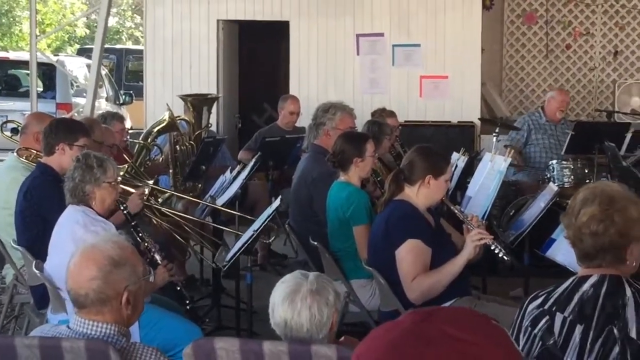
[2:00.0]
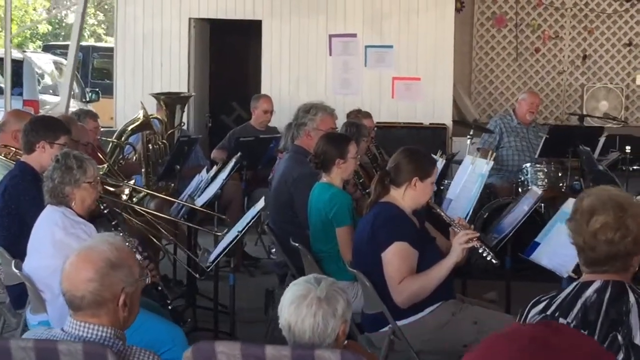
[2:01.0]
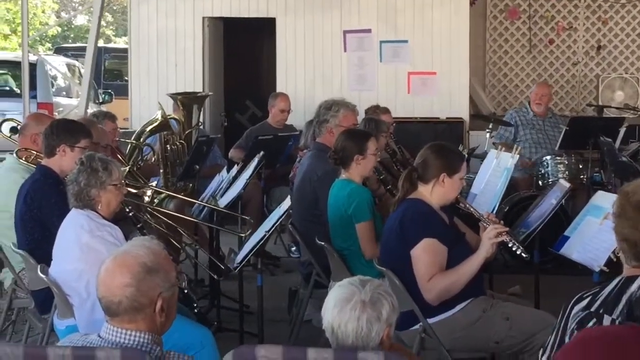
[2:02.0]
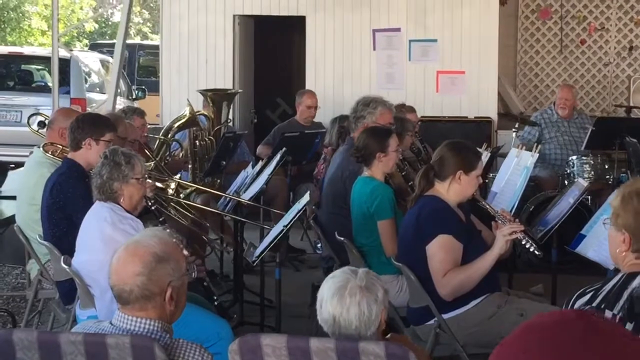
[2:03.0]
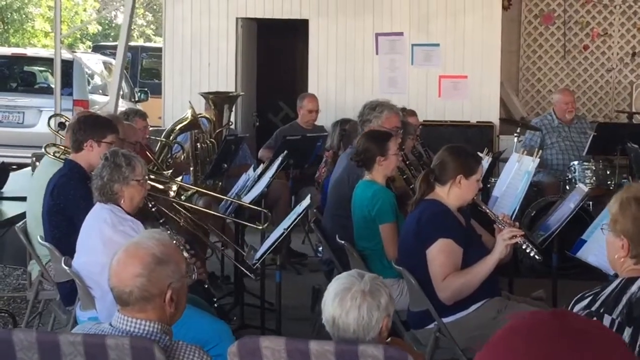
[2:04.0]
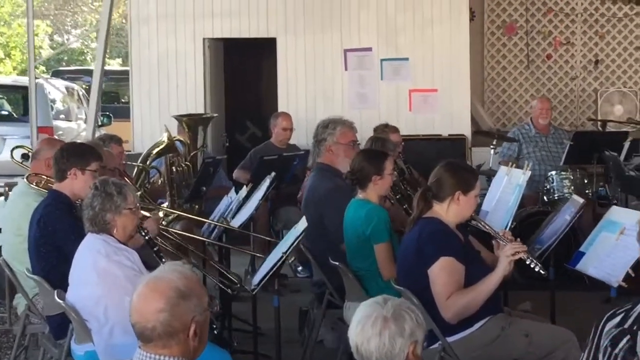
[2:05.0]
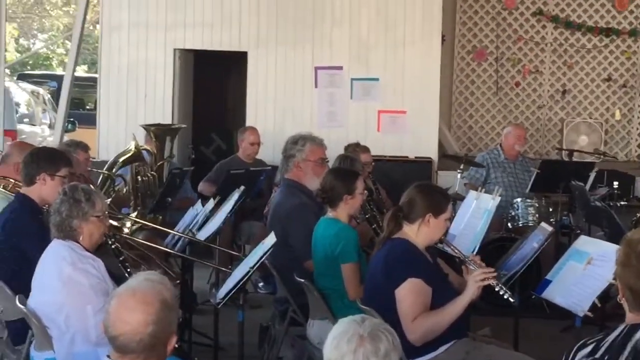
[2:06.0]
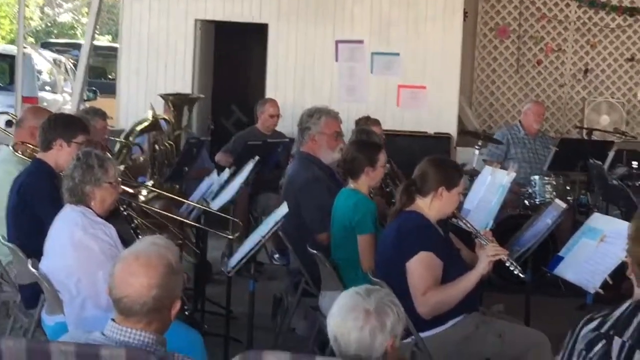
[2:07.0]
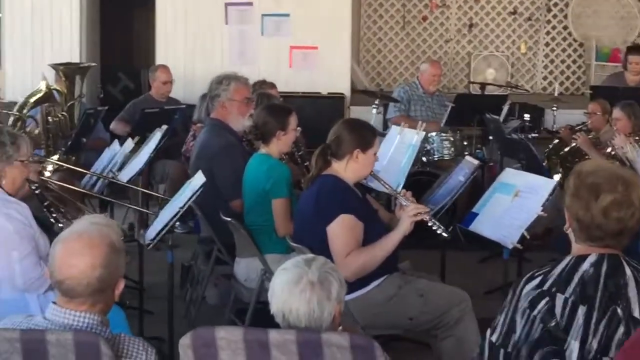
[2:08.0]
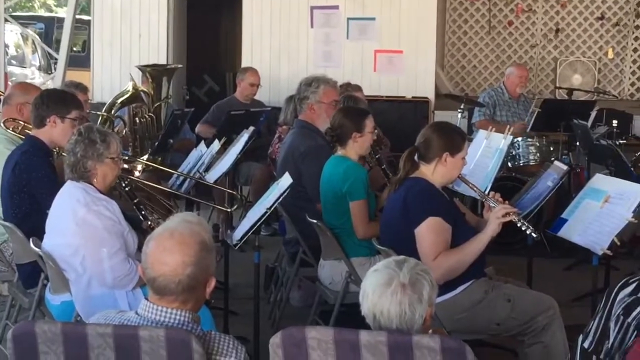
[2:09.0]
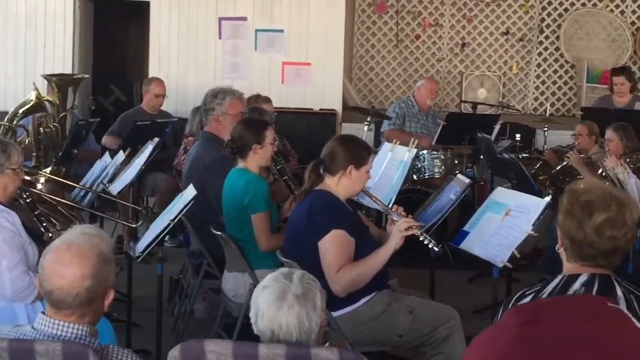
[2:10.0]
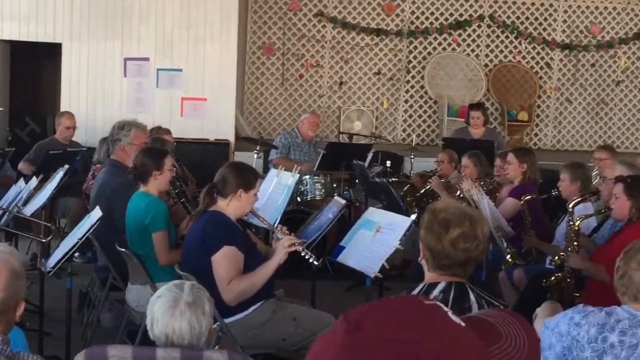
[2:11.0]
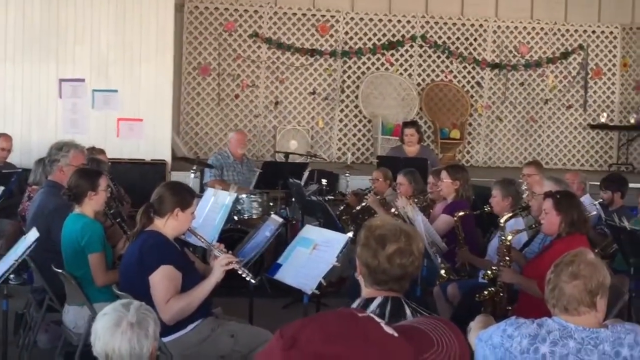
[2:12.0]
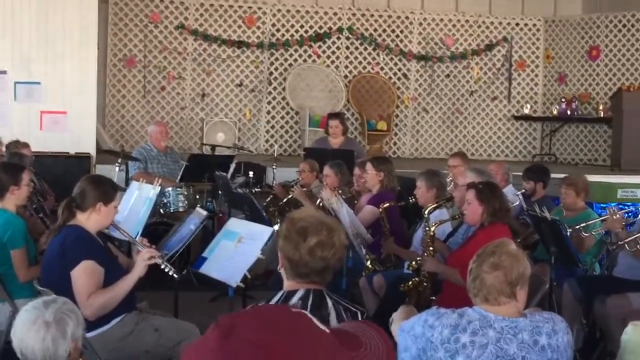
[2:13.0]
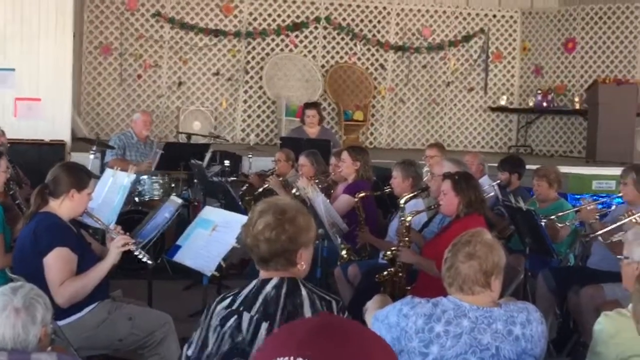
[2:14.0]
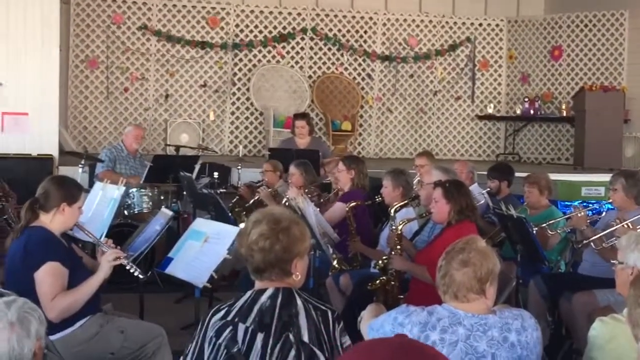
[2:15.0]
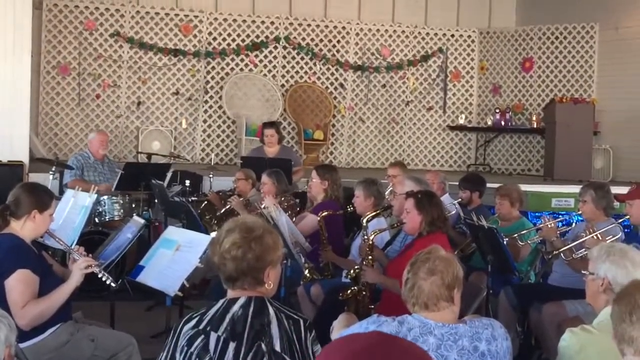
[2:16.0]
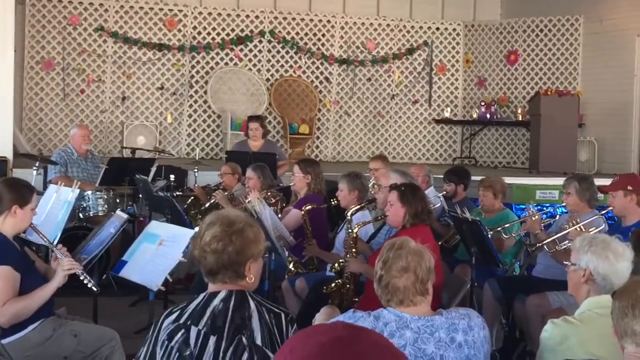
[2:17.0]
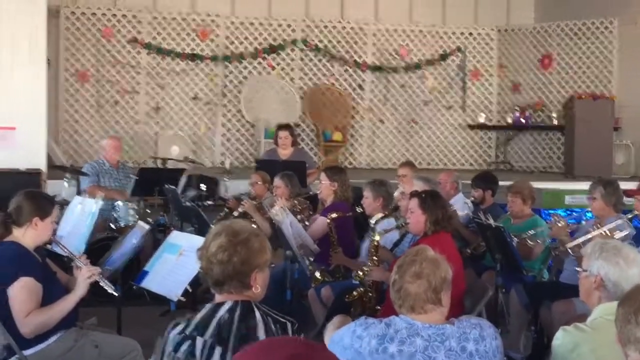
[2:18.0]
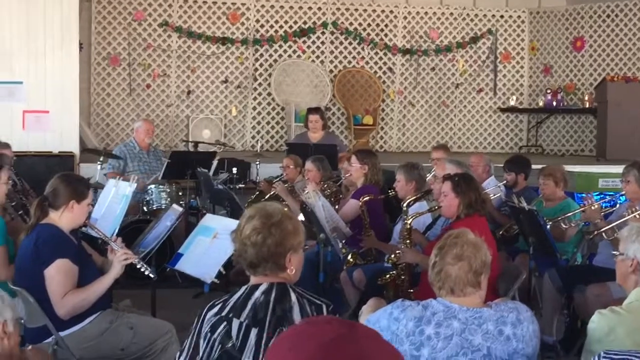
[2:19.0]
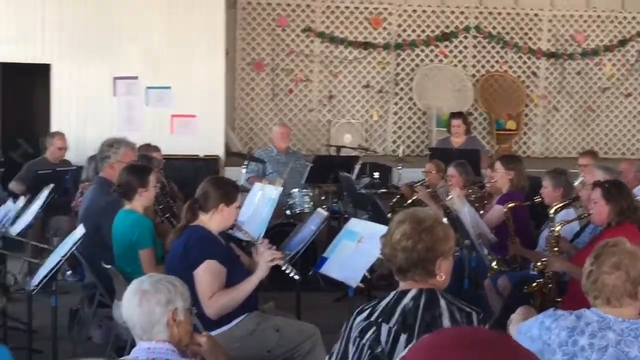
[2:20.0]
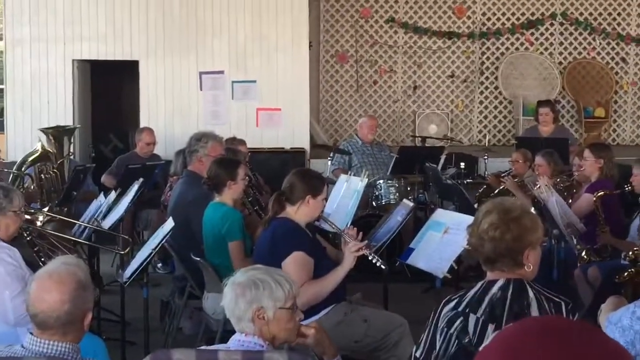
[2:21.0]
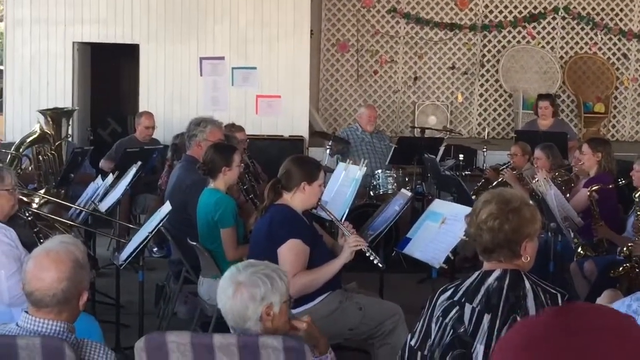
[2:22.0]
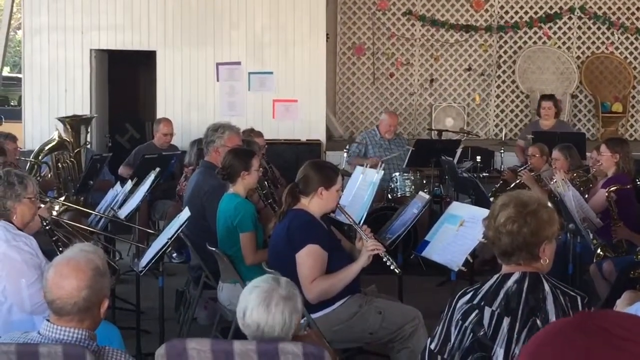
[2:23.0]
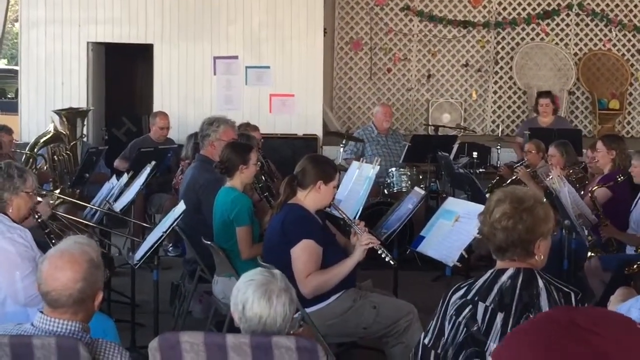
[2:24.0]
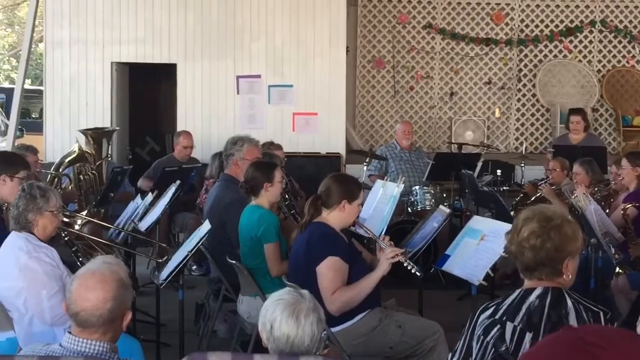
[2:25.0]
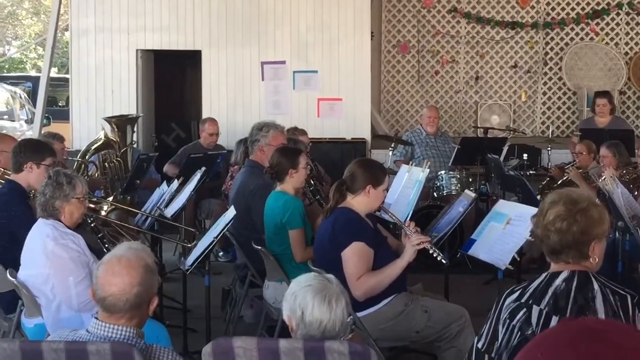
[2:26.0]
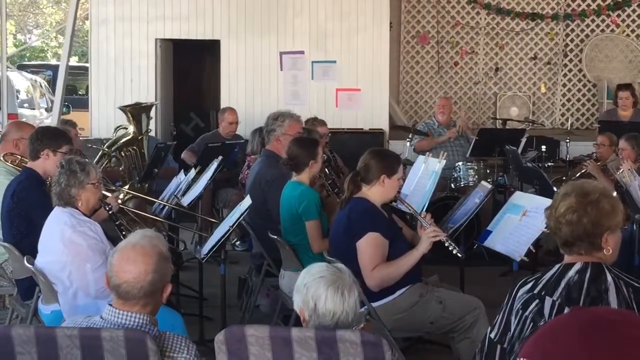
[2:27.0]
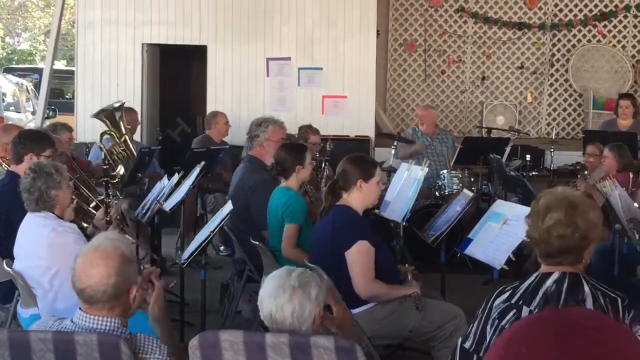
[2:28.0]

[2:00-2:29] The musicians play very energetically. The camera has moved a little to the right and is angled to the left, showing more through the window, which seems to extend floor to ceiling to the left of the band area. A couple of parked cars and some green trees, not palm trees, are visible in the background. The camera then pans to the right to show more of the wind section: horns, saxophones and trumpets, played by an equal mix of men and women. The overall colors are cream, brown, some dark reds, blacks, greens and some white. At least two fans on the stage are blowing in the general direction of the musicians.